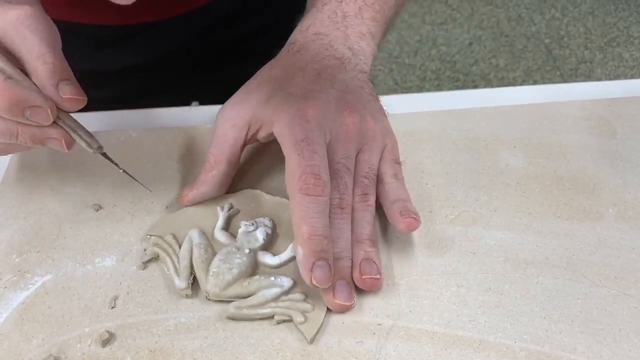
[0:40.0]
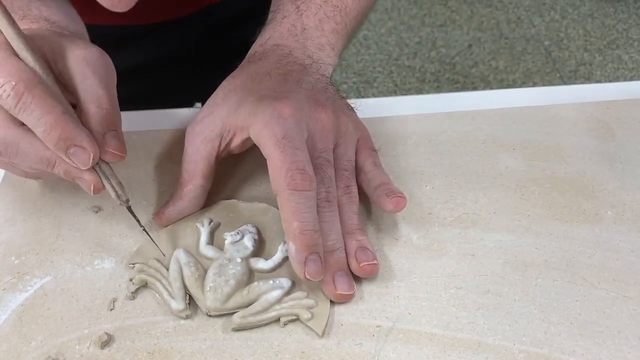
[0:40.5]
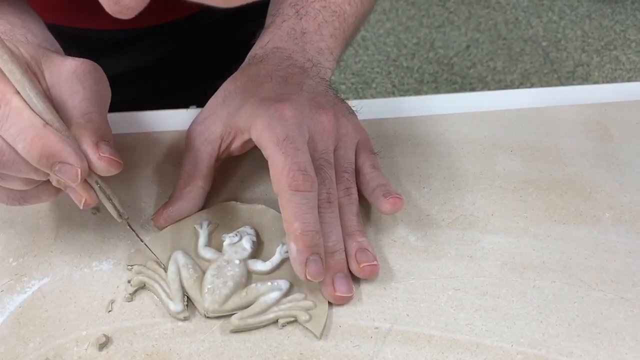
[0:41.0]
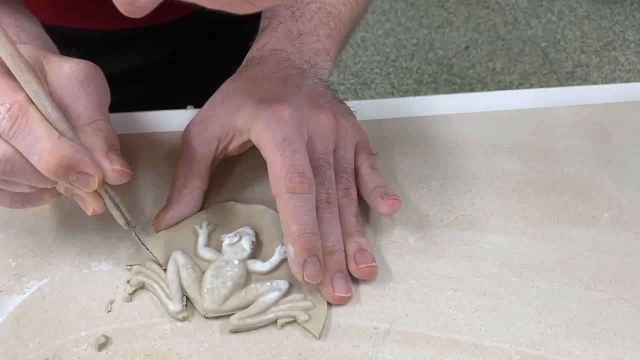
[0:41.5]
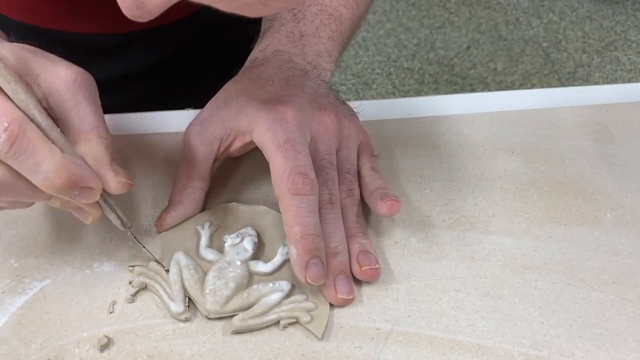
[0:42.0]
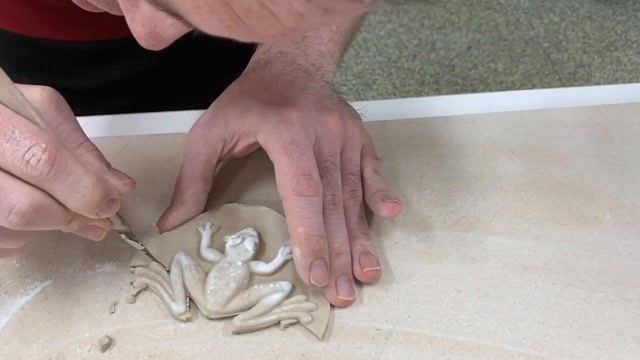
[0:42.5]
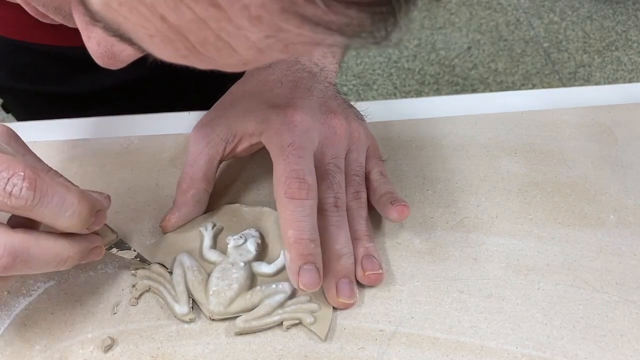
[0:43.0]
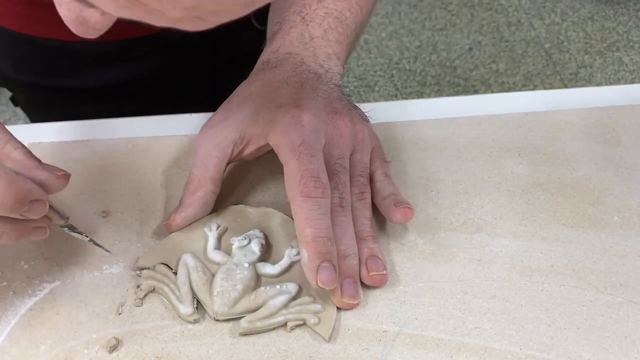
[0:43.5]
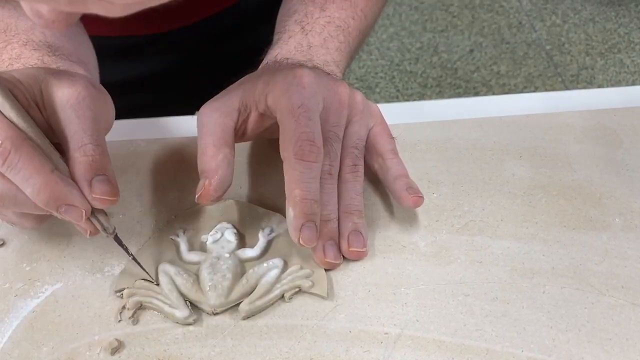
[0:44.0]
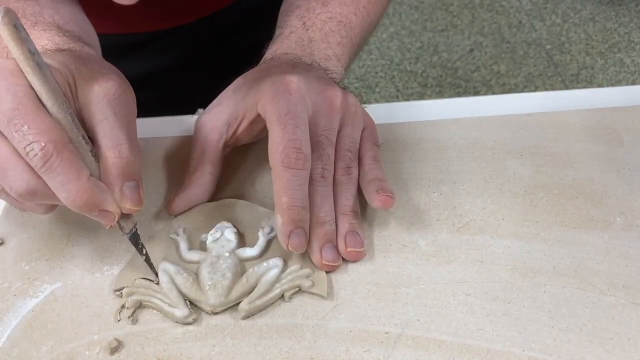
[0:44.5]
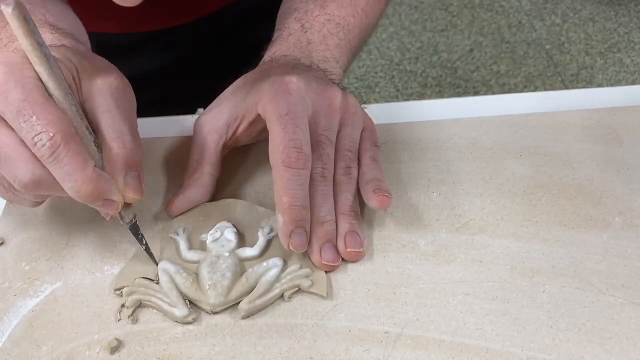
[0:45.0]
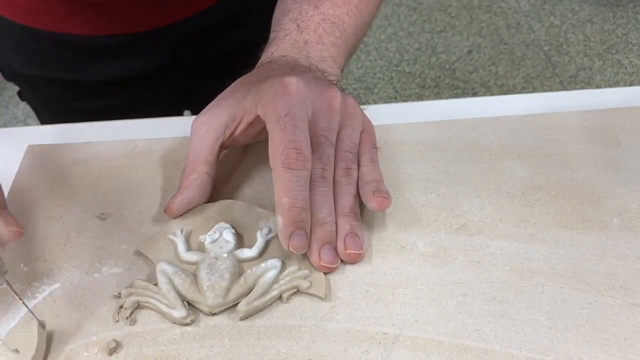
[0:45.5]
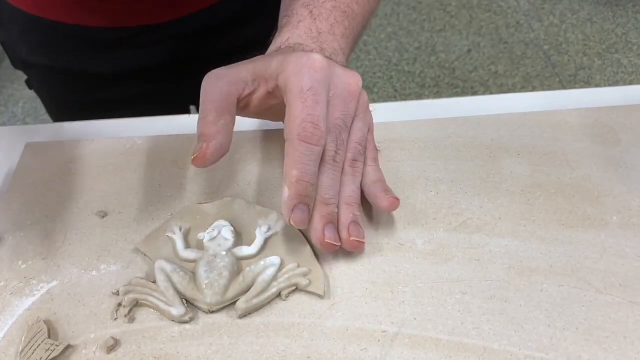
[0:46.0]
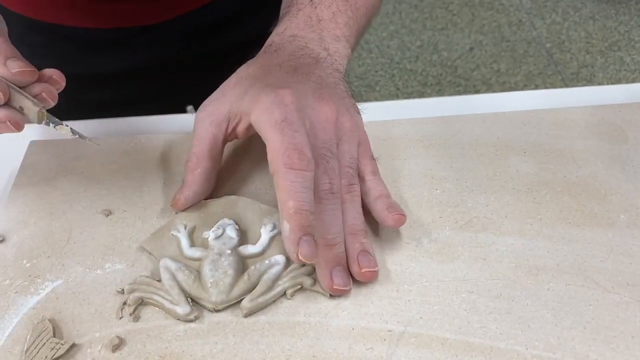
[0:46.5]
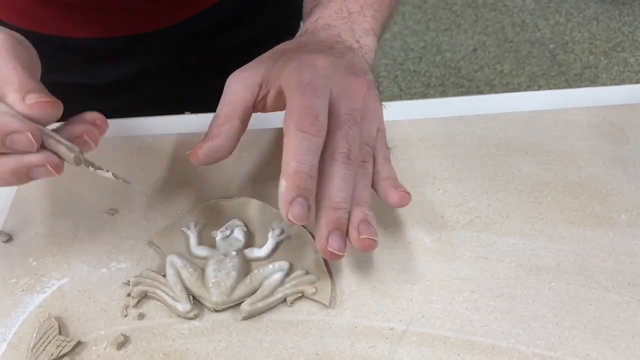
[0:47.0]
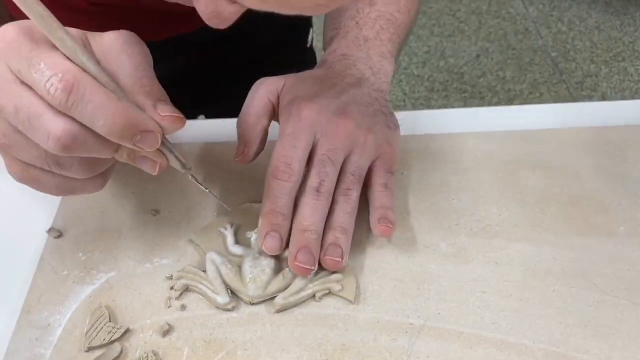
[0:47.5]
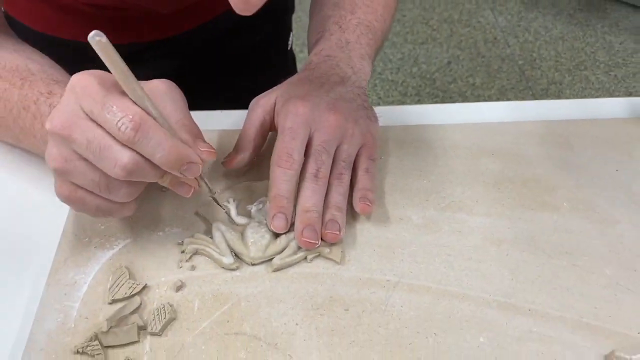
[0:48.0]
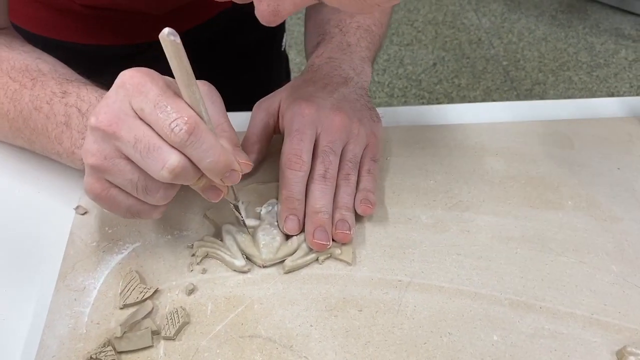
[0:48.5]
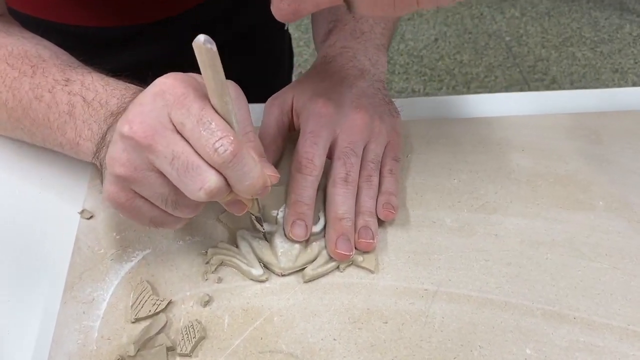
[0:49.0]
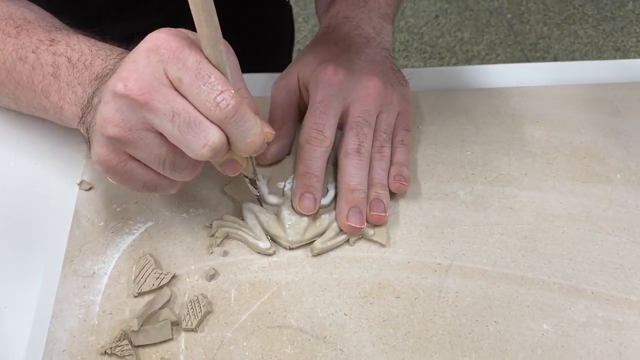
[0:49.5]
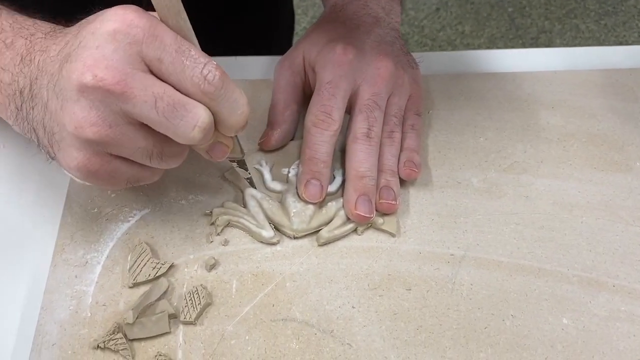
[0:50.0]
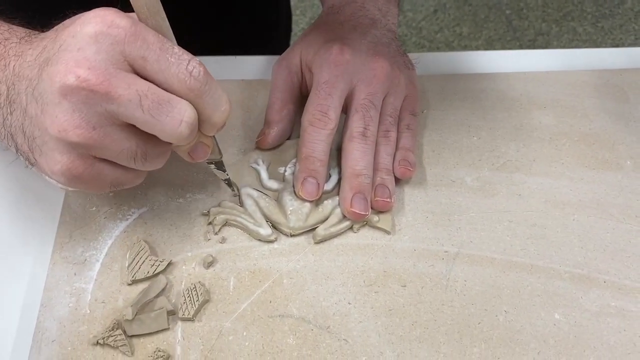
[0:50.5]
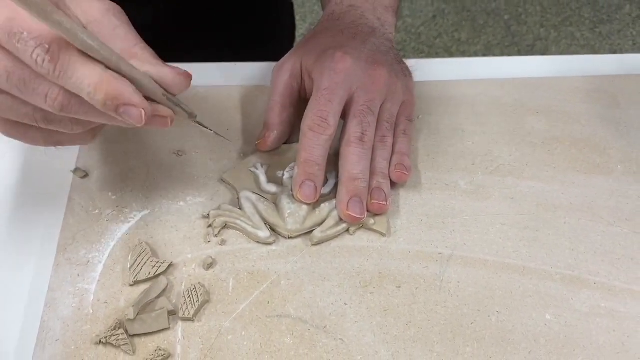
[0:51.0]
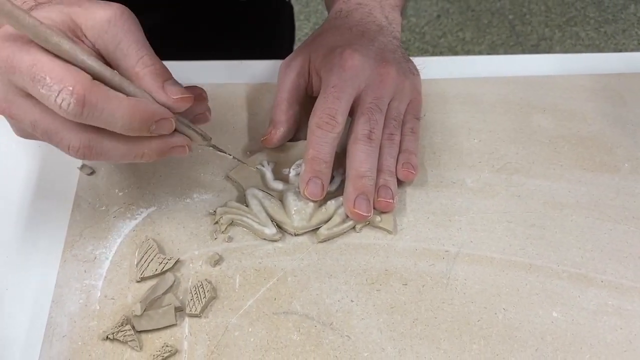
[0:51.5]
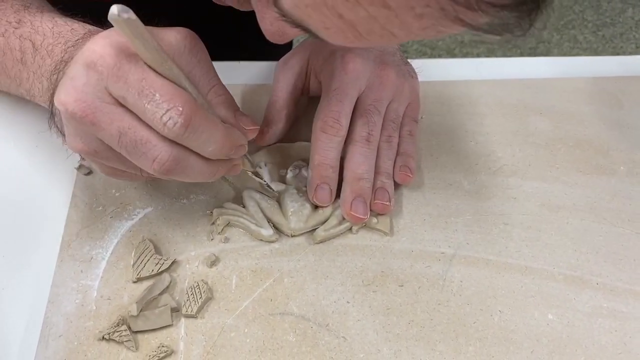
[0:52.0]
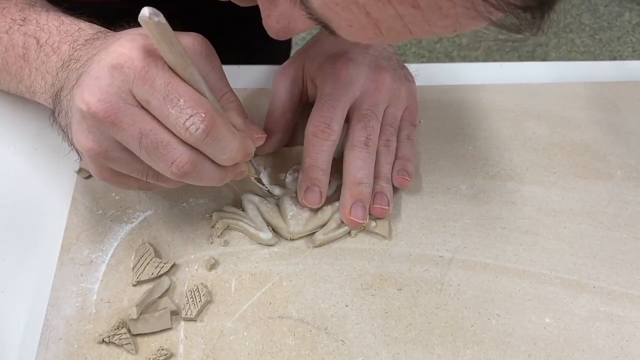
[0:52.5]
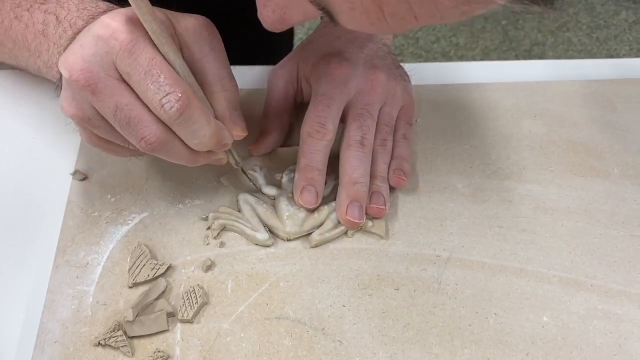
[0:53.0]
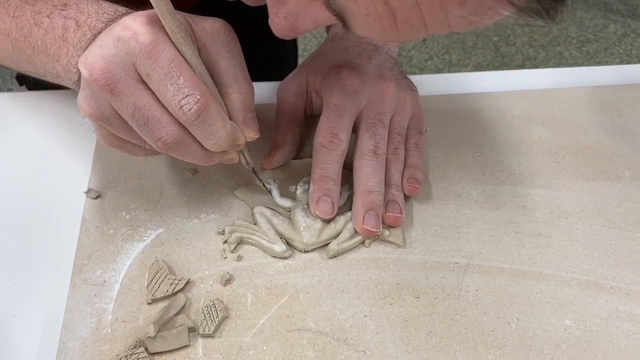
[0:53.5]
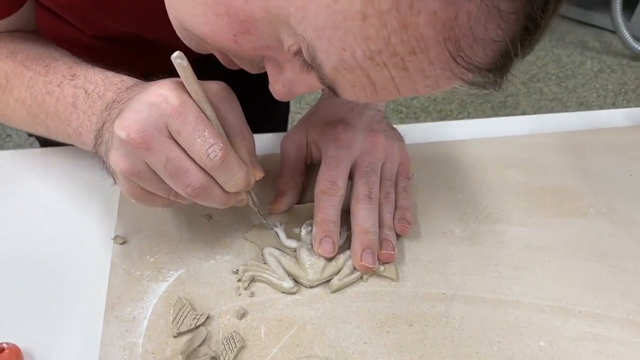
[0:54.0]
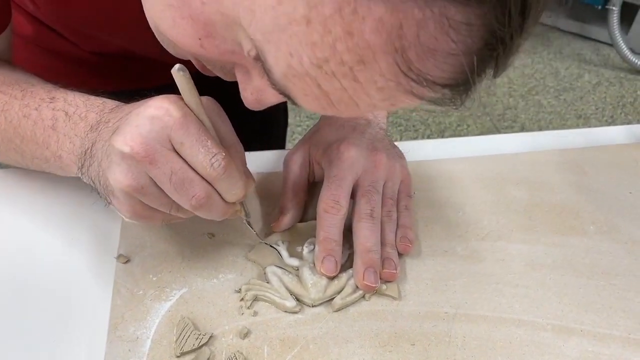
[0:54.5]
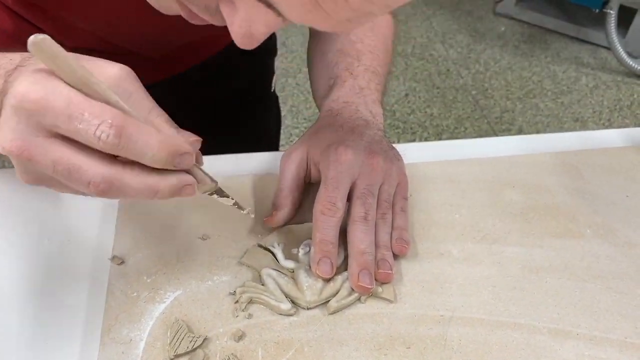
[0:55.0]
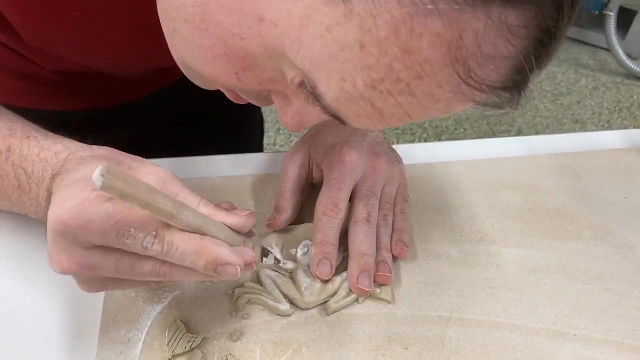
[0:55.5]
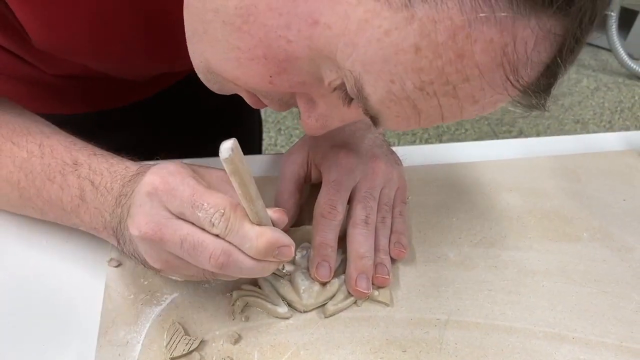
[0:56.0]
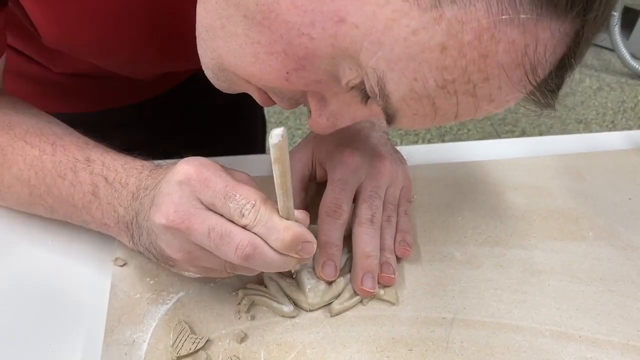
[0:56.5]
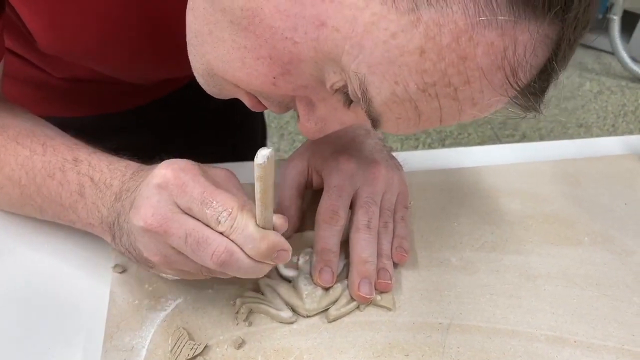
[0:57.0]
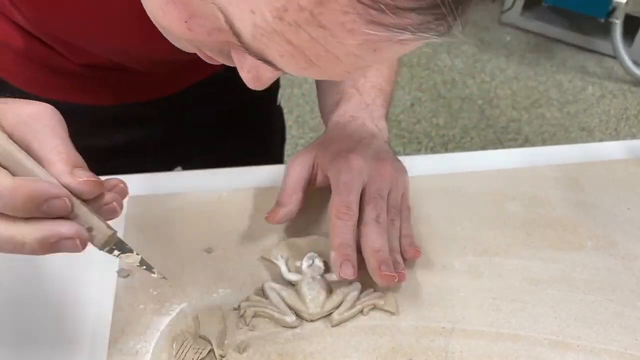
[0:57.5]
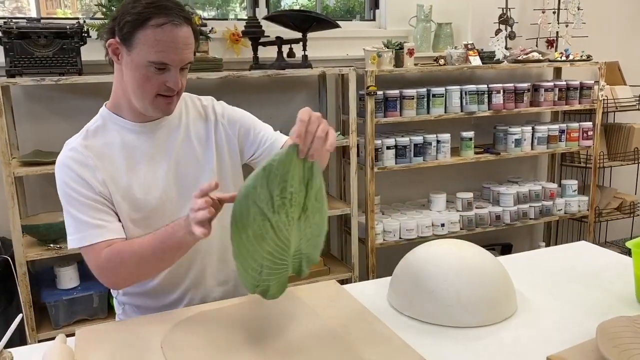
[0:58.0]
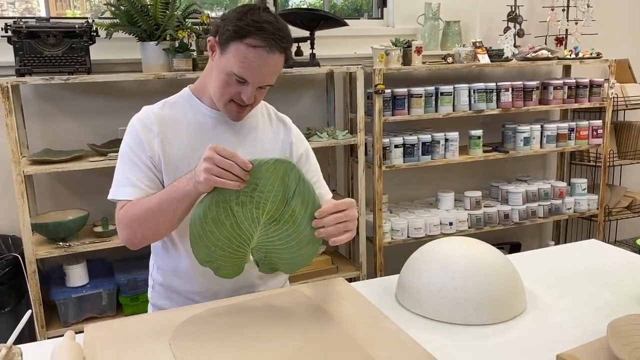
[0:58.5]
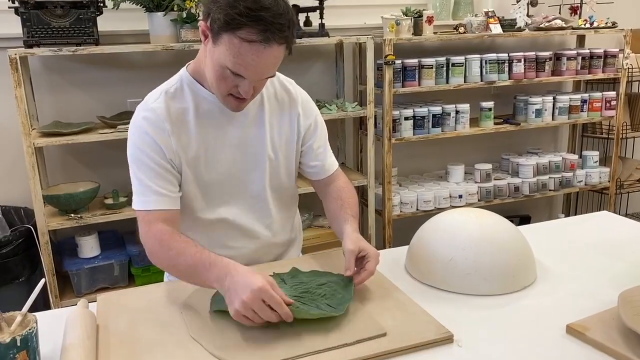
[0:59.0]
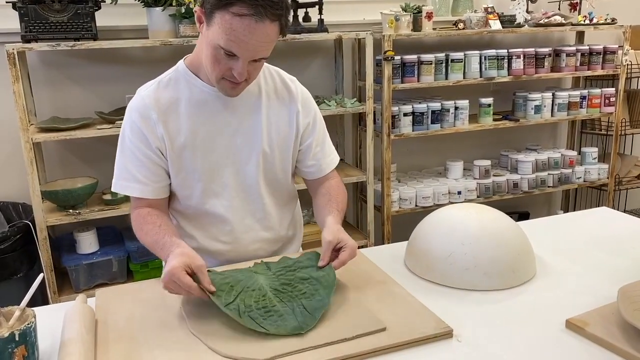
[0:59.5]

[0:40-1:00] The man keeps cutting out the frog's outline with the sharp scalpel, bending down periodically for a closer look; his face is focused as he works around the top of the frog's leg and onto its arm. After a couple of seconds of cutting, the scene moves on. A man in a white shirt holds, in both hands, a green putty shape that appears to be the leaf structure, and gently sets it down onto the surface beneath him with both hands. Behind him, two tan wooden shelves line the back wall of the art studio, holding various objects; the right shelf appears to have many bottles of paint lined up.